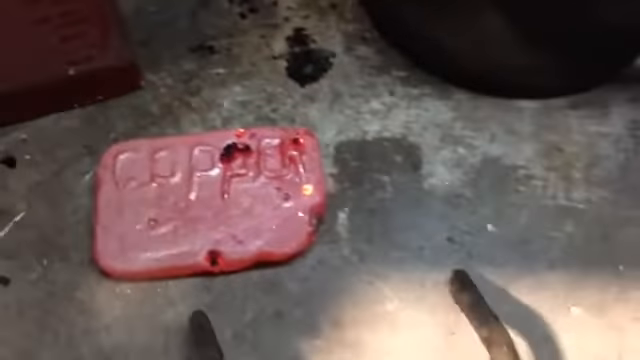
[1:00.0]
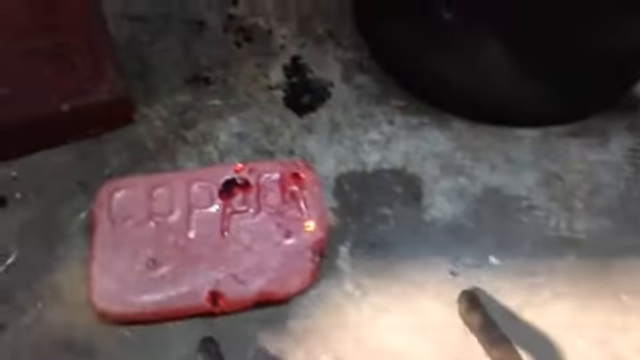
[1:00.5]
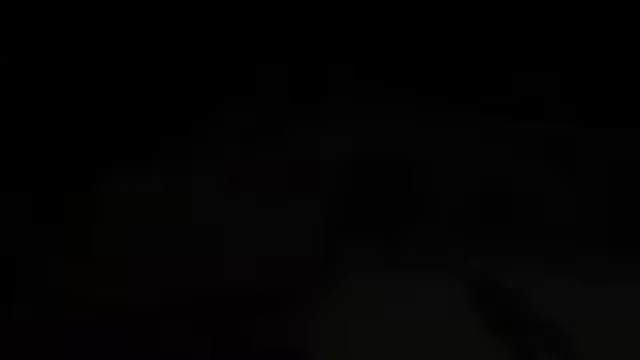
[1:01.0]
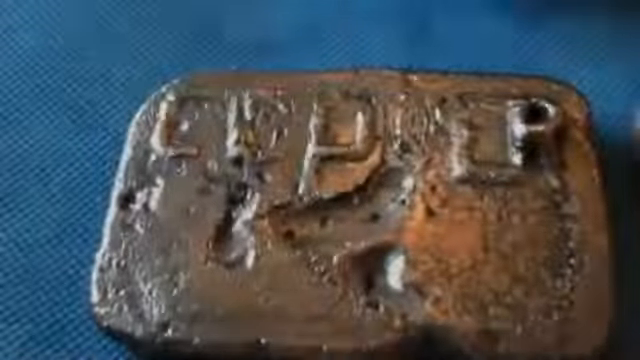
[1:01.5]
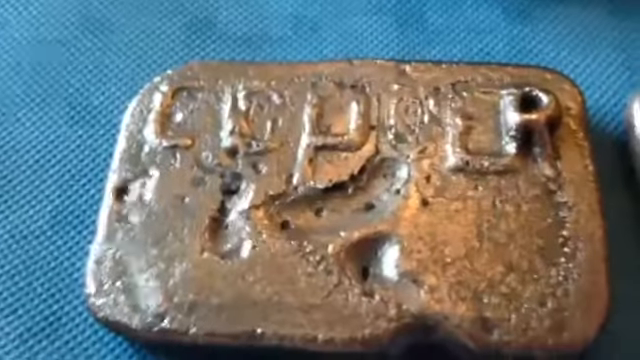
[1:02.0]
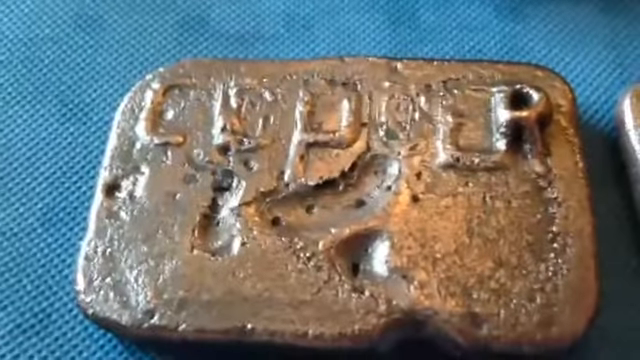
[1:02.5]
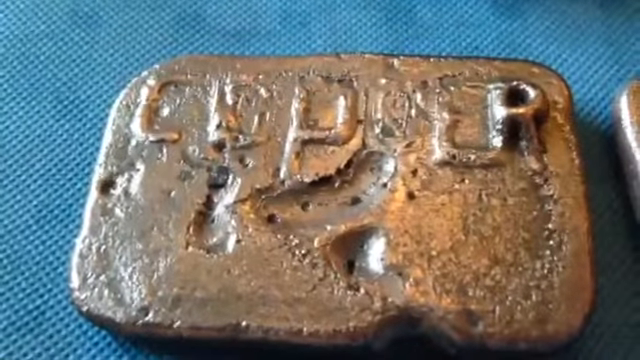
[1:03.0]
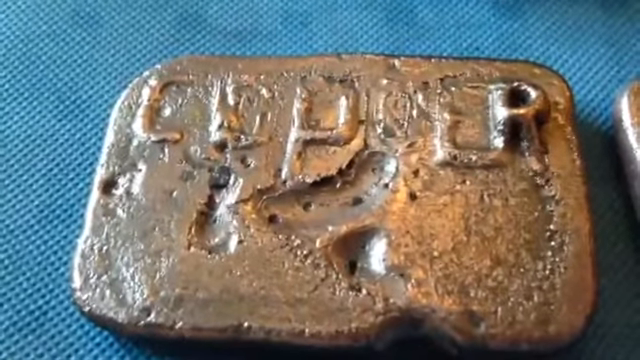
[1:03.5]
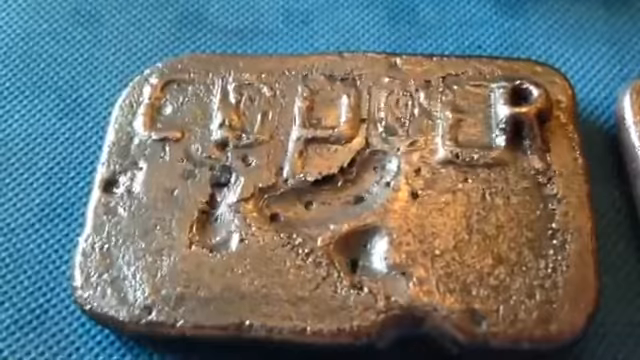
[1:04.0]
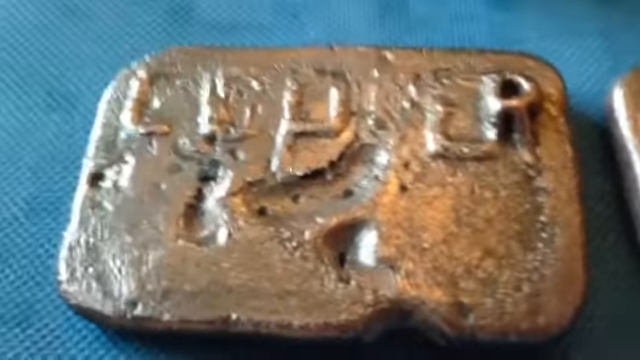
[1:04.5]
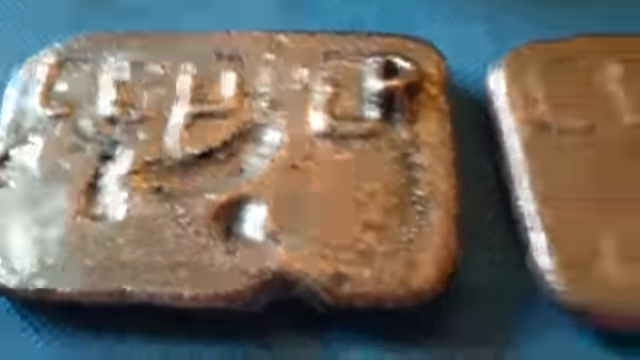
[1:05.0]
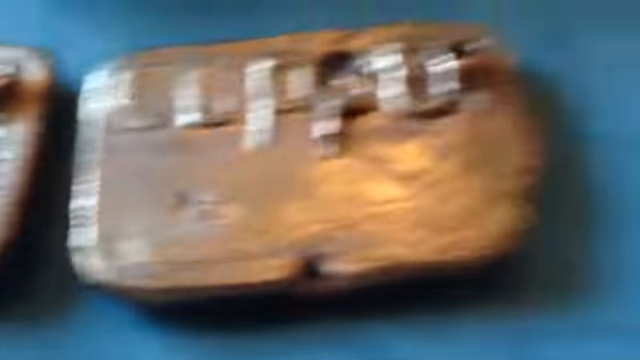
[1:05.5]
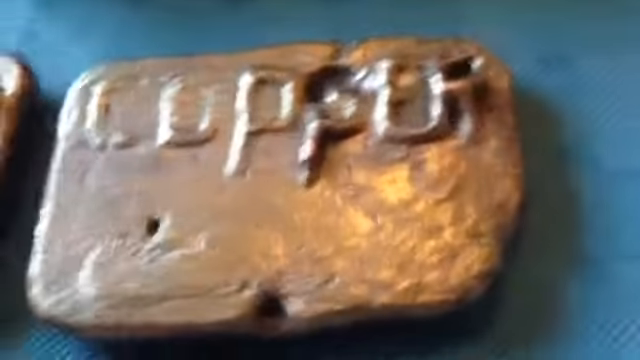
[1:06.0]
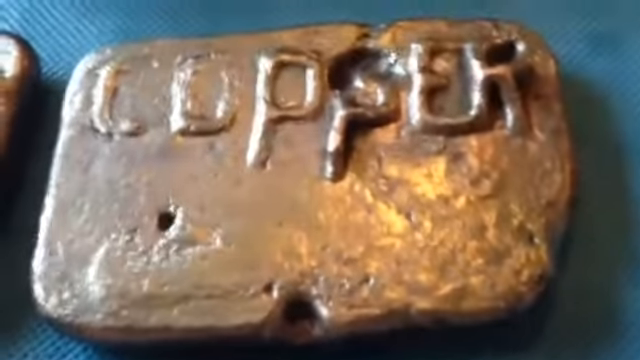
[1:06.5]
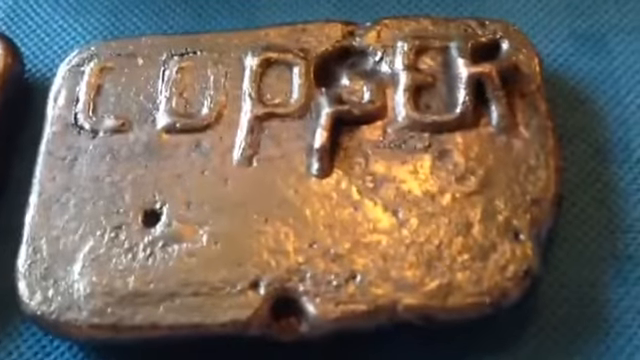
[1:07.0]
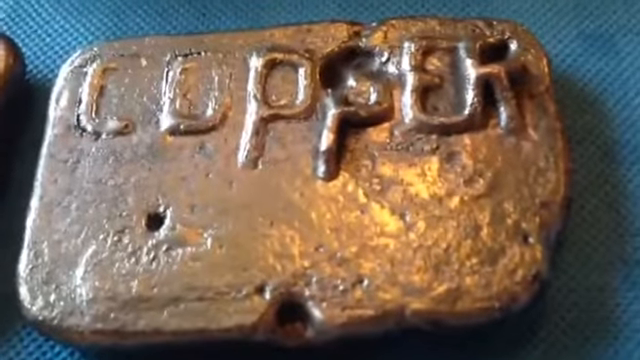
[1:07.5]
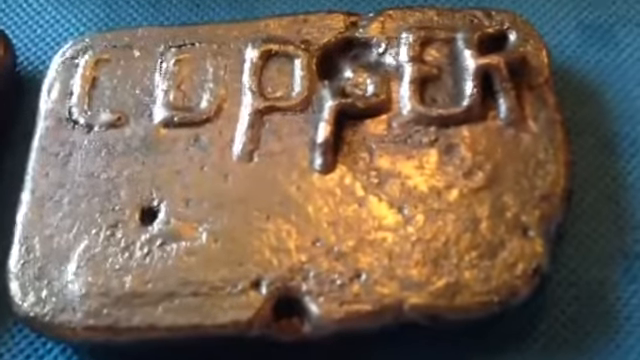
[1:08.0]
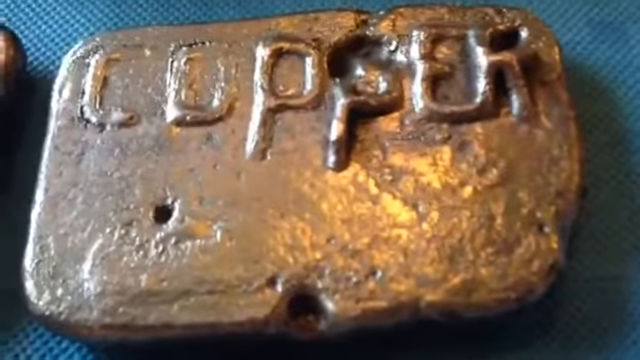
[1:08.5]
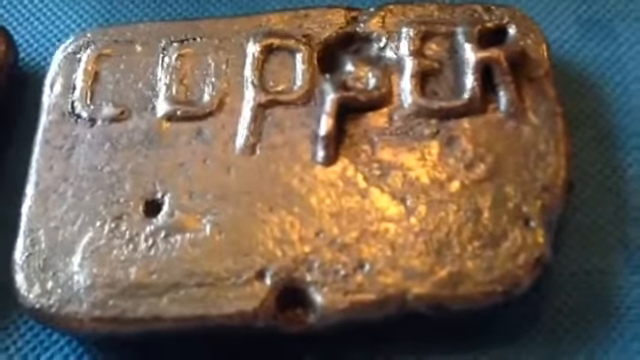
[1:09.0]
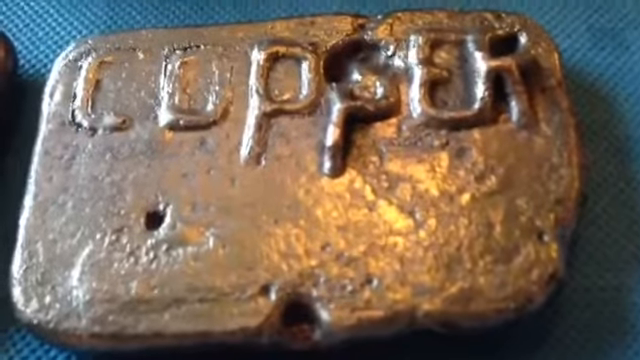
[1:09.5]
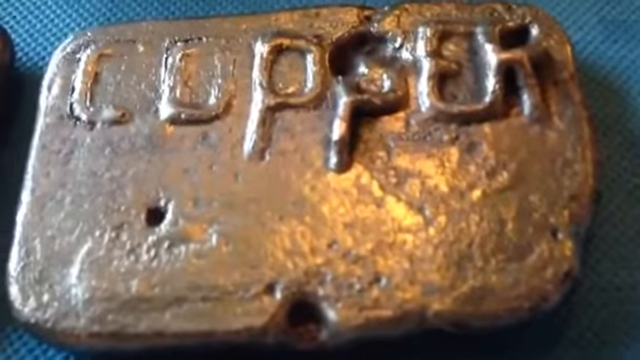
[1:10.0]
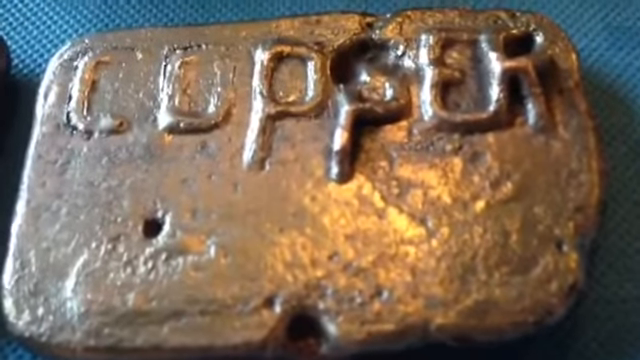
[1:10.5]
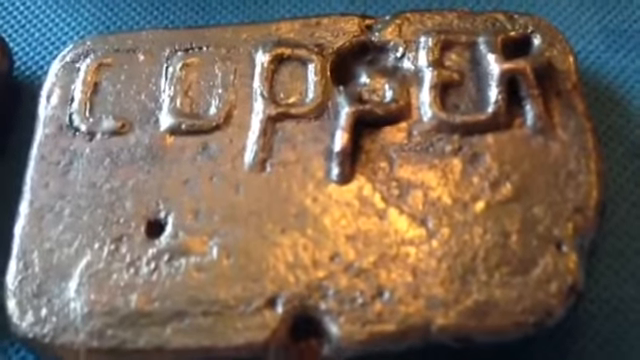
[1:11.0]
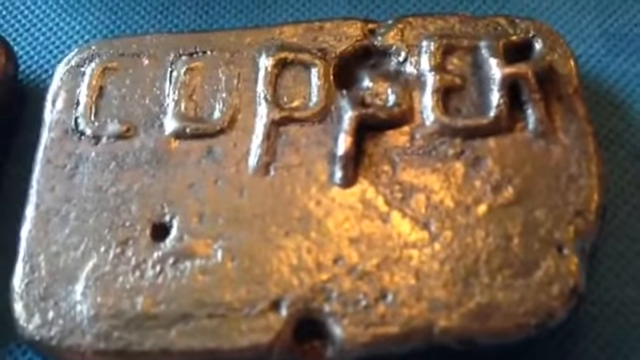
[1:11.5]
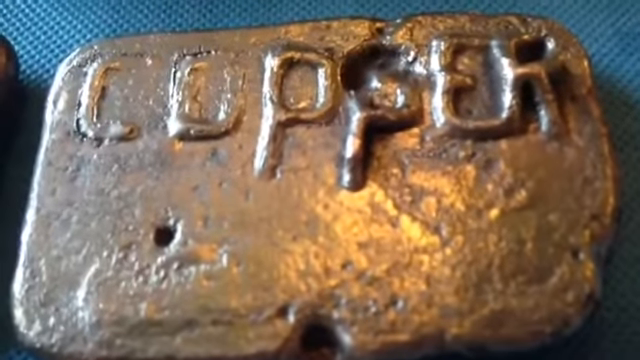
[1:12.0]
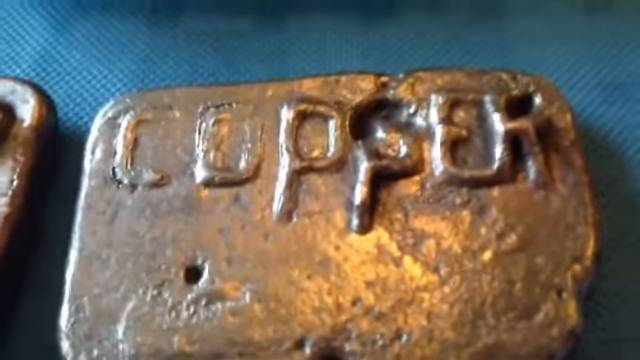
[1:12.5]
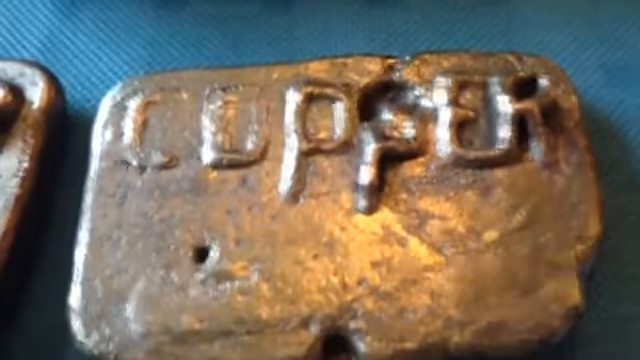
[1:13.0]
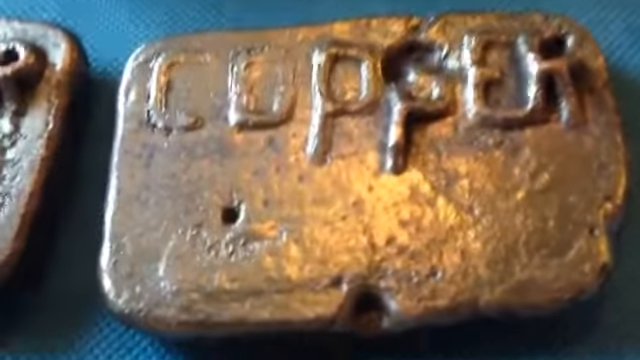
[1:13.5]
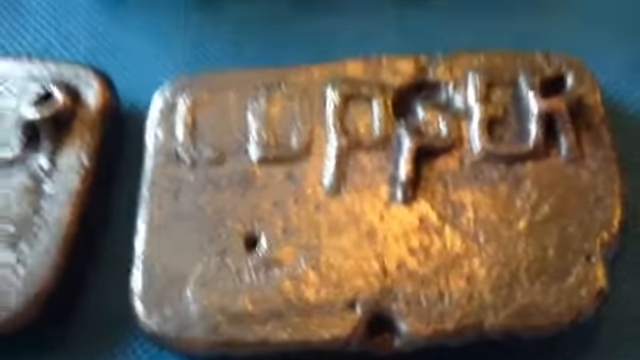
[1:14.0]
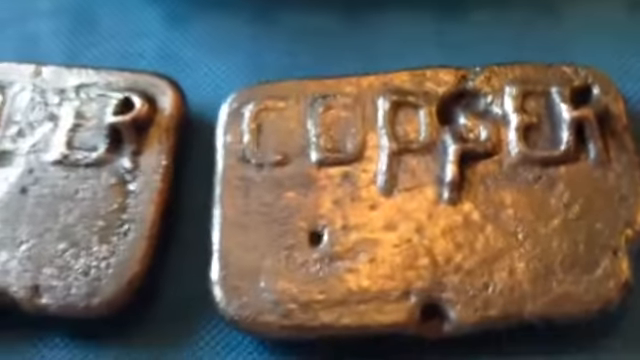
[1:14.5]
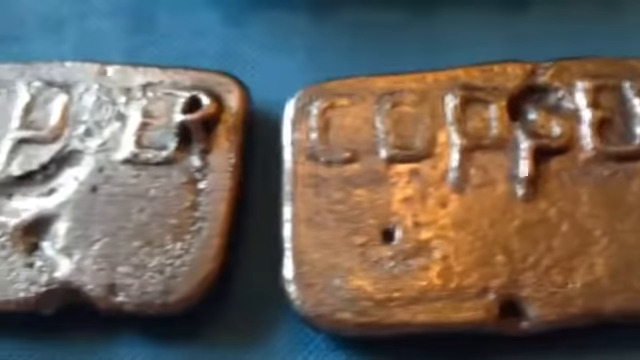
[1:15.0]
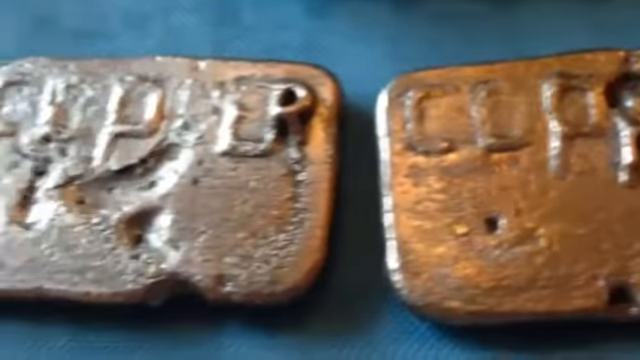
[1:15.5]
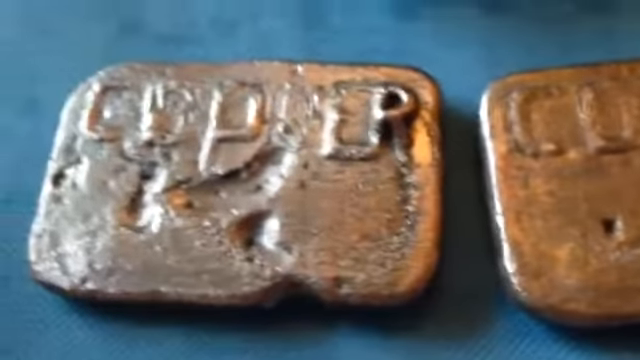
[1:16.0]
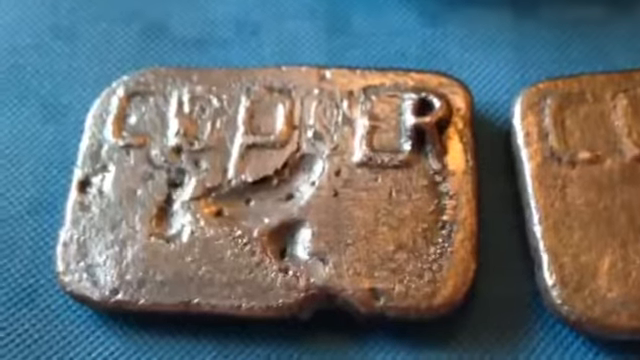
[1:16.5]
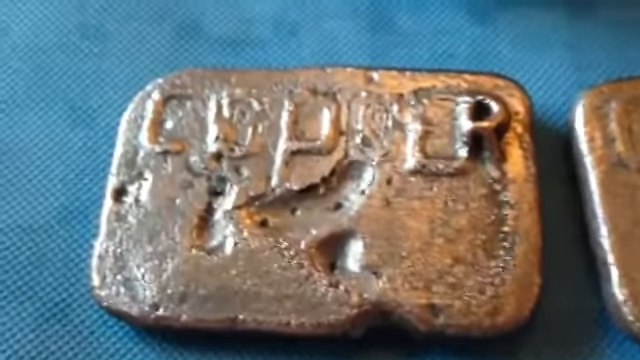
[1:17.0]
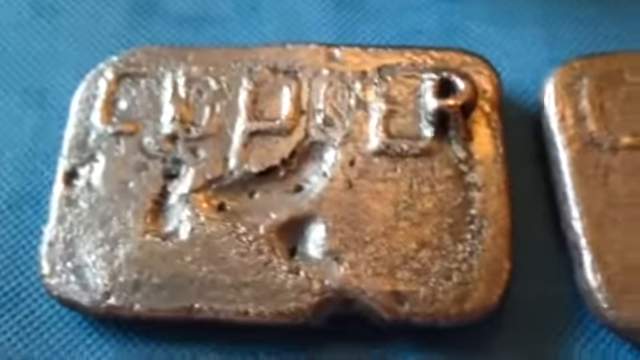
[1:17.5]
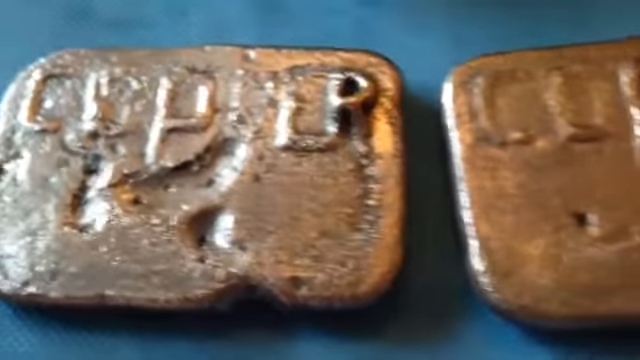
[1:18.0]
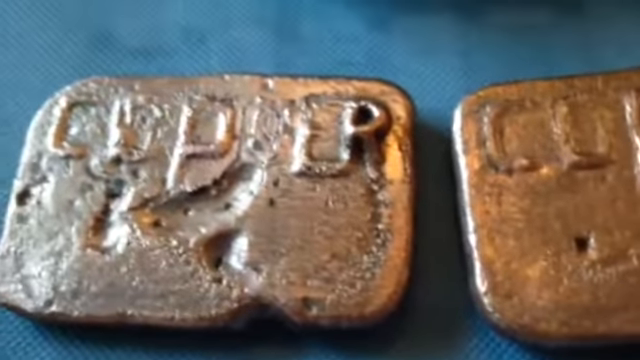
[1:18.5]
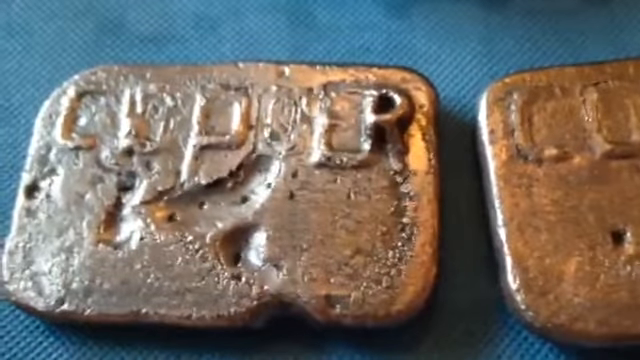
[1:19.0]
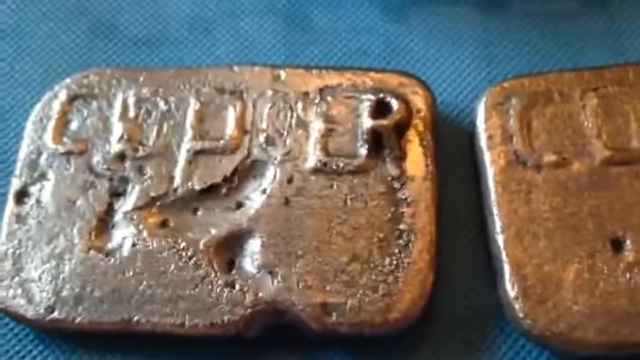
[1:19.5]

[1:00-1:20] A molded piece of copper that has just come out of the flame has the lettering "copper" faintly visible at the top and some indentations at the bottom. It is sitting on a blue dotted cloth square piece with rounded edges. Another piece on the right also shows the "copper" lettering and has a couple of holes. The pieces are silver and gold in color, and the camera zooms in on the two rounded square pieces lying on the table.